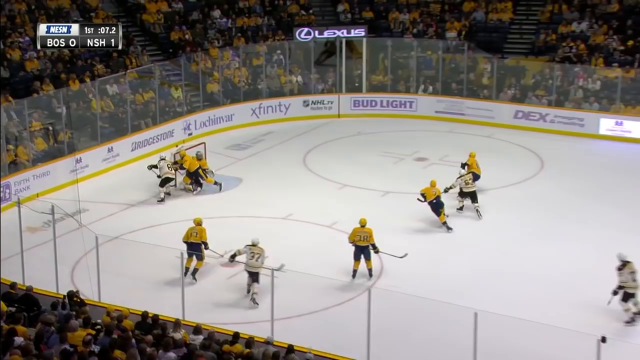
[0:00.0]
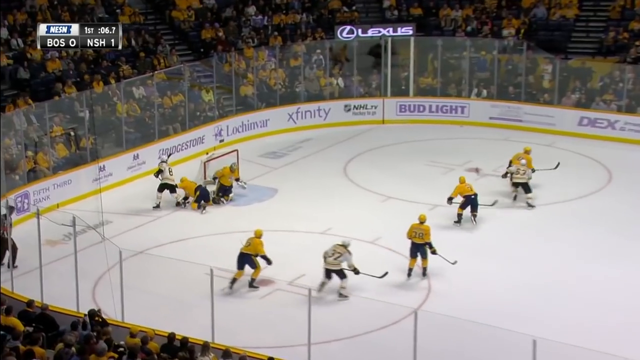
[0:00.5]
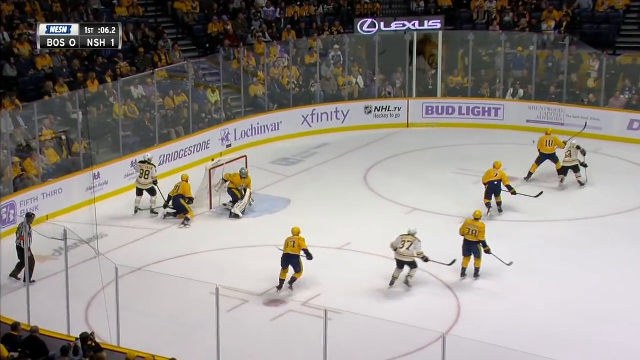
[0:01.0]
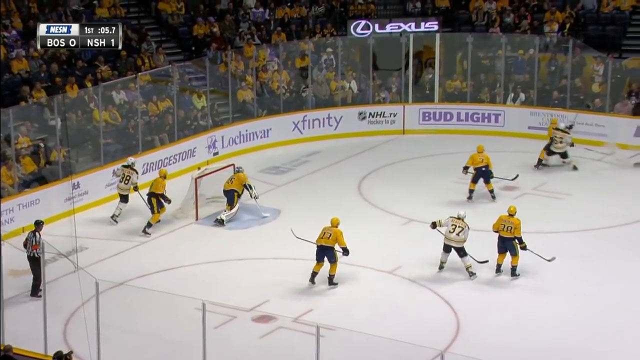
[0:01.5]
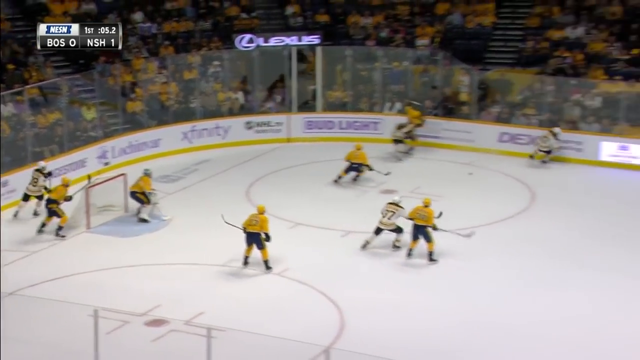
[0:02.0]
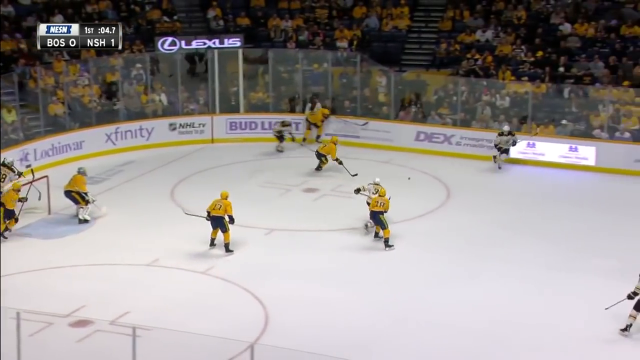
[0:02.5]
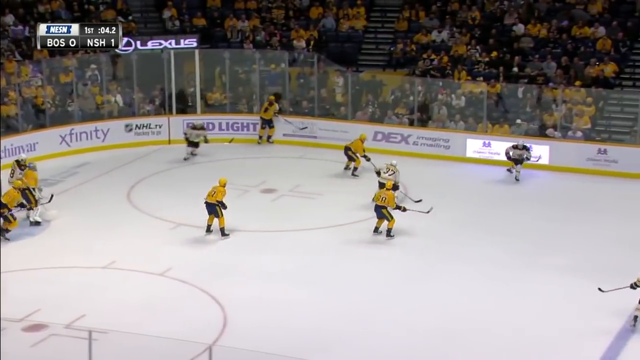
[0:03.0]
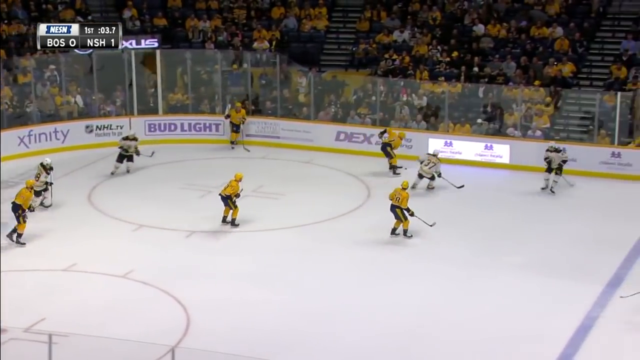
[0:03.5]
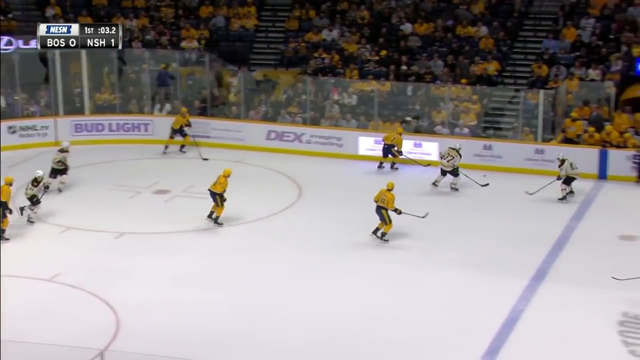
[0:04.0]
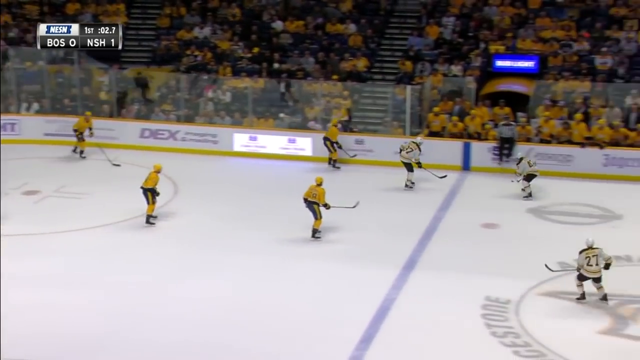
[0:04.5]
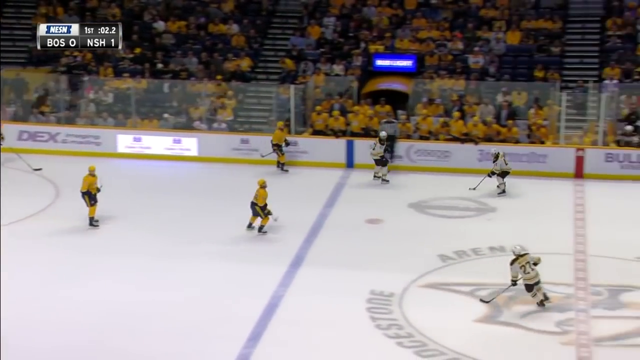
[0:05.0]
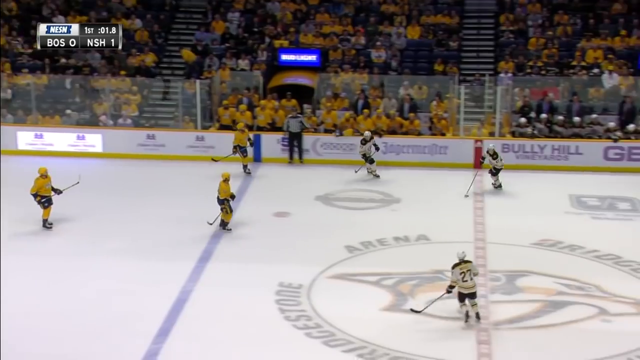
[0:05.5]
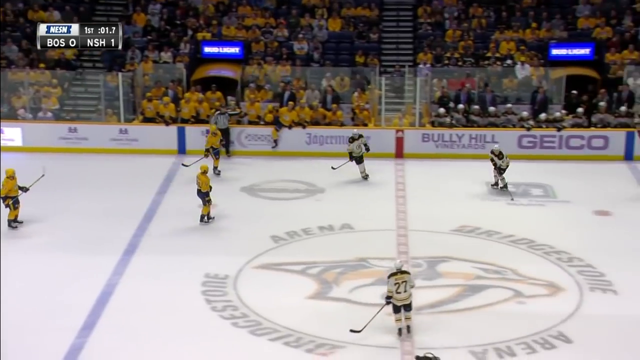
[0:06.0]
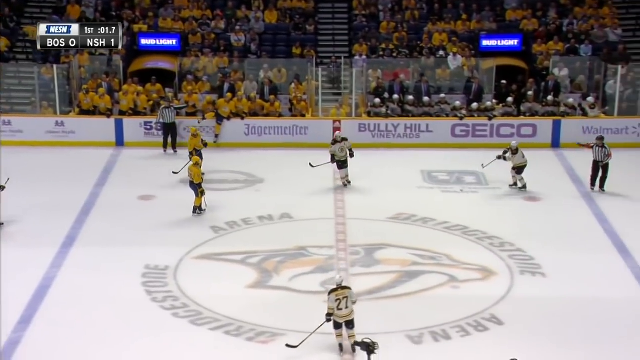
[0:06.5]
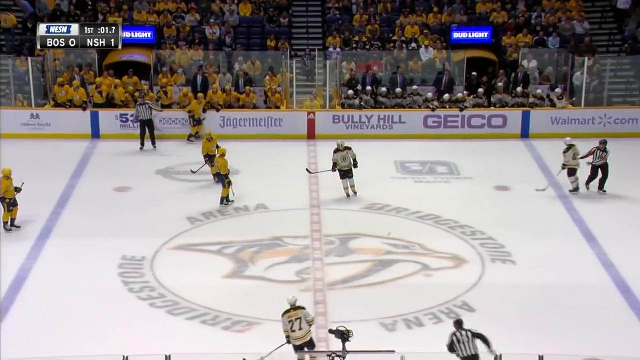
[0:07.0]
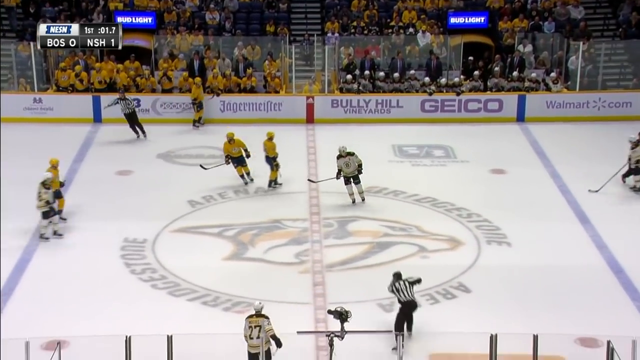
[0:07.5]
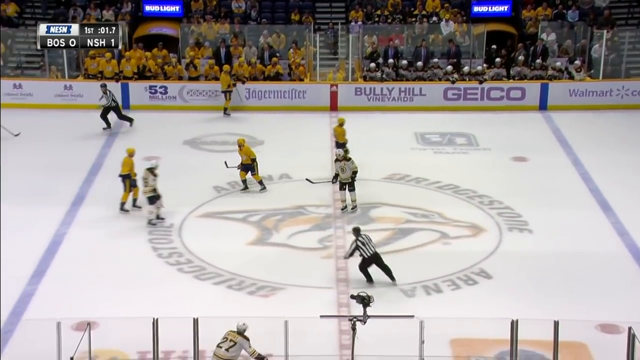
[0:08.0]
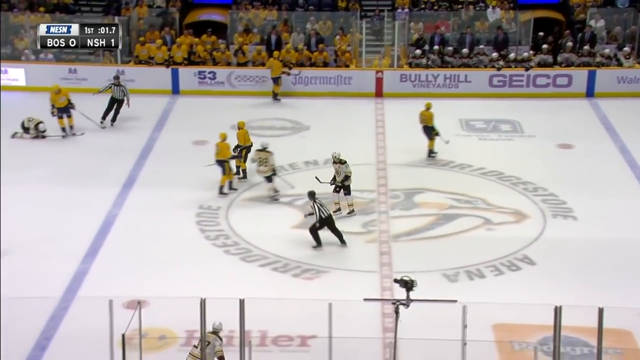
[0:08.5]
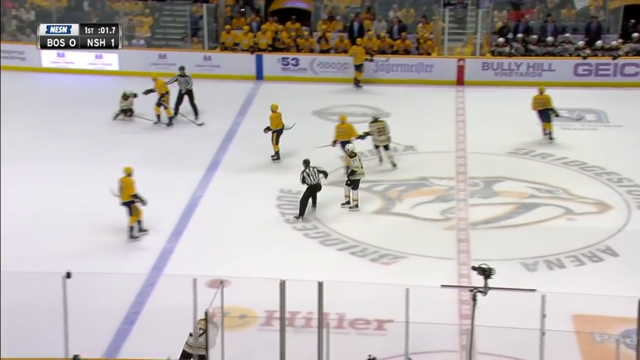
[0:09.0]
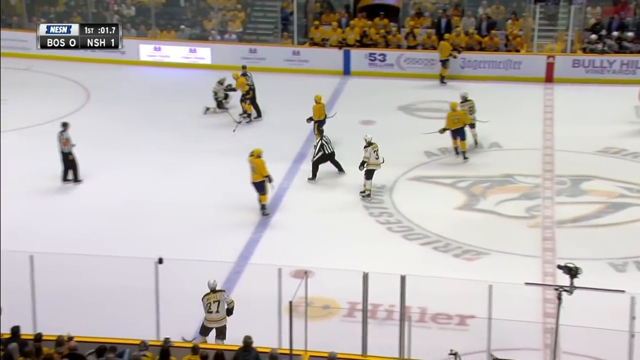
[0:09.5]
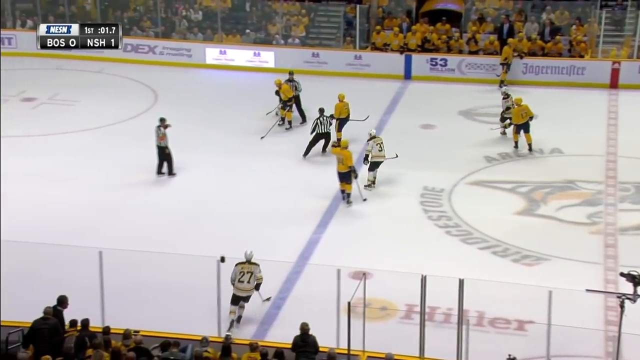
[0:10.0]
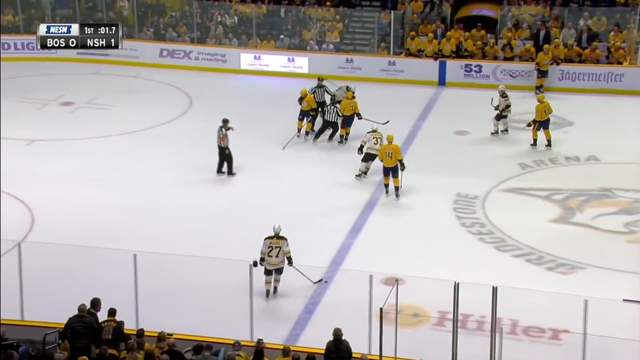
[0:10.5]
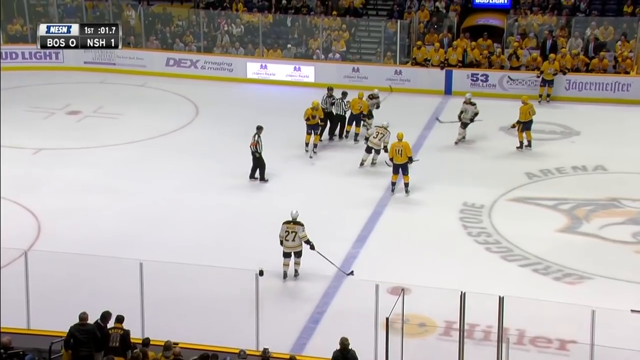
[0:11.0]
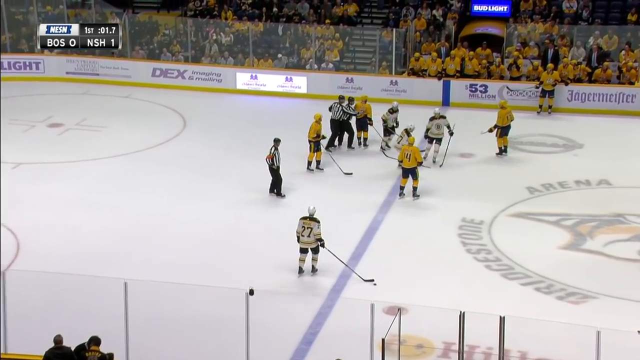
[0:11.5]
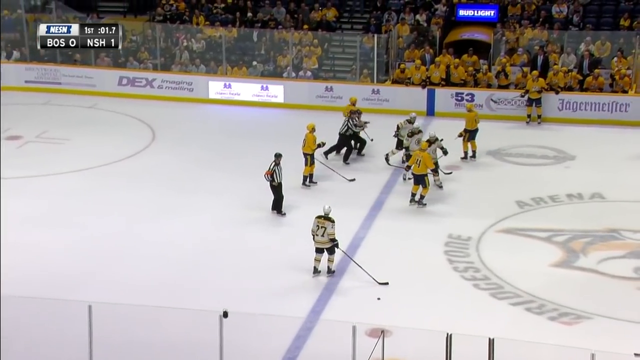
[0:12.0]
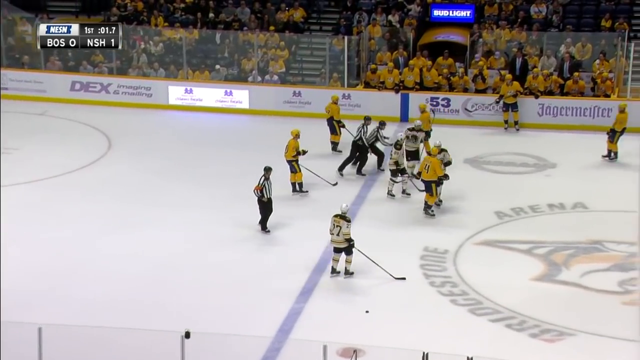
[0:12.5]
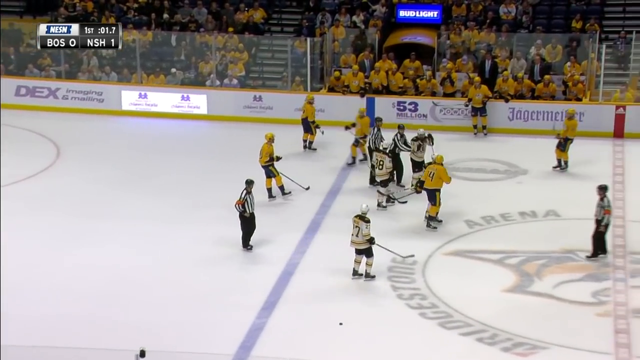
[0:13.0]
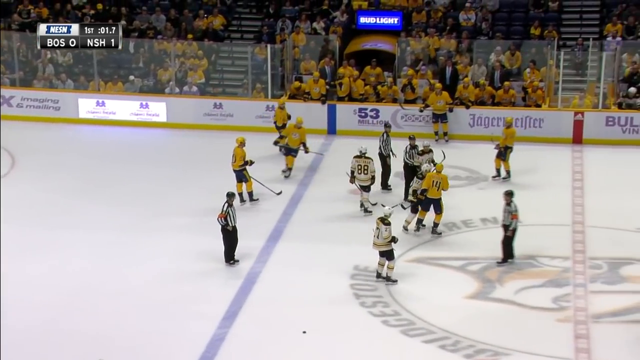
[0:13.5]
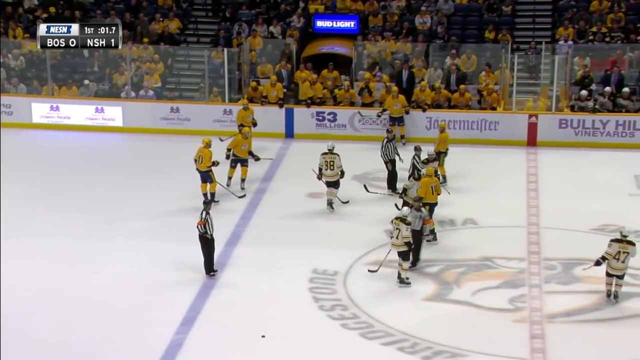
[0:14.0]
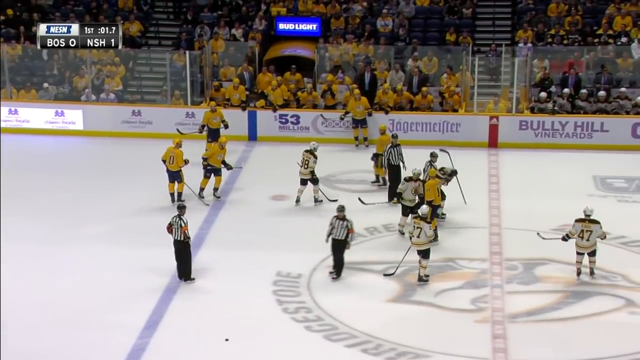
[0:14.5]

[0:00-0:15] A hockey game is shown, with a title that reads "Gotta see it, Brad Marchand mocks...". Two hockey teams are on the ice. One team wears yellow jerseys, black pants, yellow helmets, yellow knee-high socks and black boots; the other team wears white and black jerseys. The players skate around, and the white team appears to have the puck in the upper portion of the screen. A referee skates around between the players, and then two referees skate up to a player in a white jersey. The white player apparently was on the ground; he gets up from his knees and holds his head. How he got onto the ground is not shown. The referees skate over to him and follow him around on the ice, apparently to make sure he is okay.